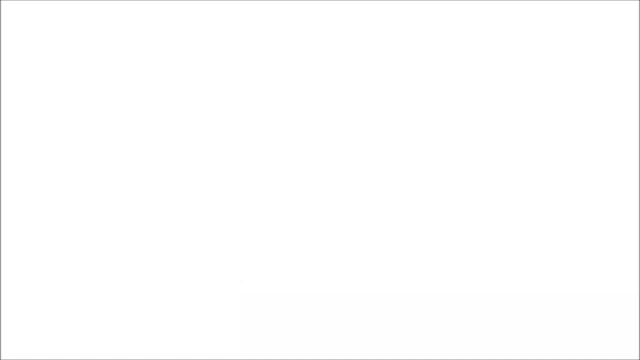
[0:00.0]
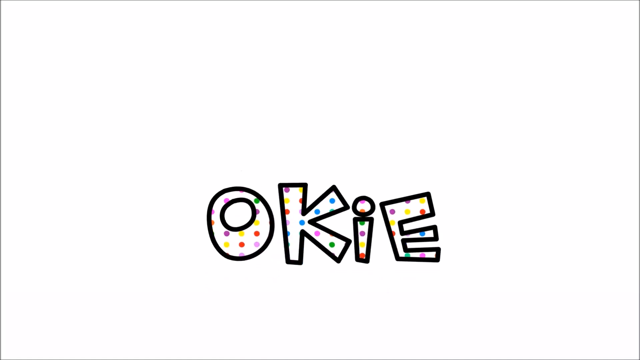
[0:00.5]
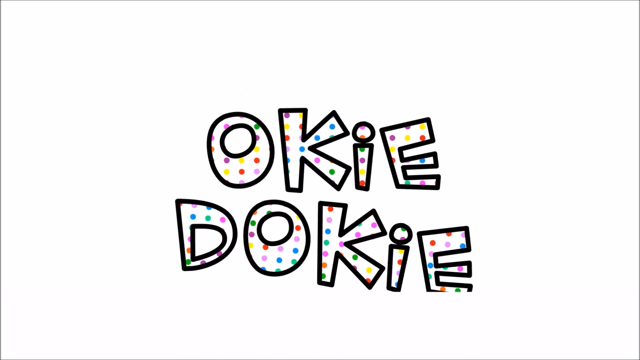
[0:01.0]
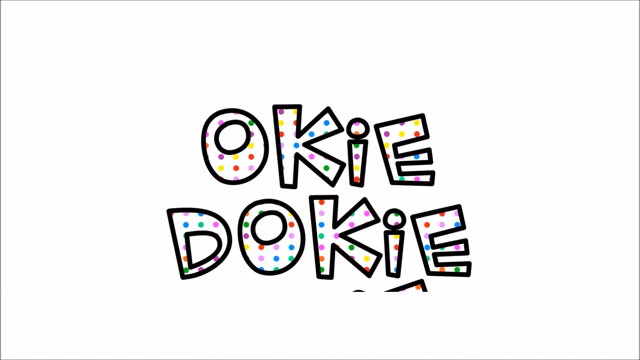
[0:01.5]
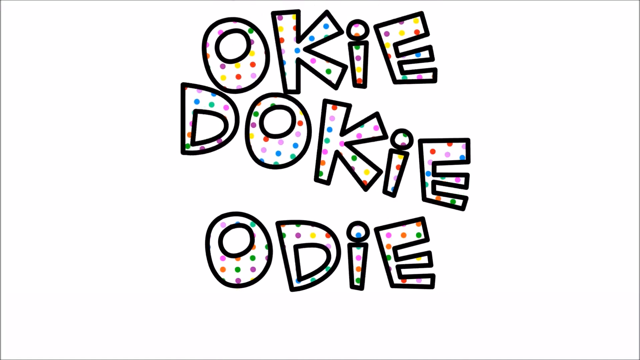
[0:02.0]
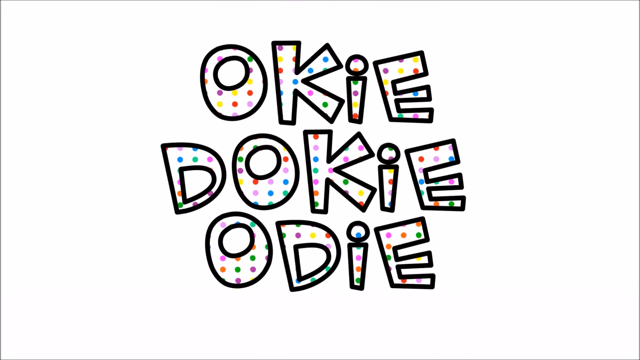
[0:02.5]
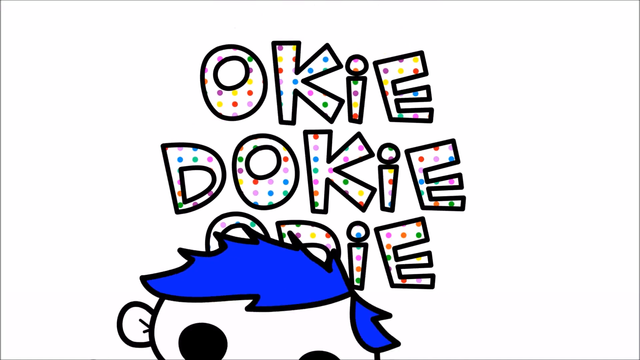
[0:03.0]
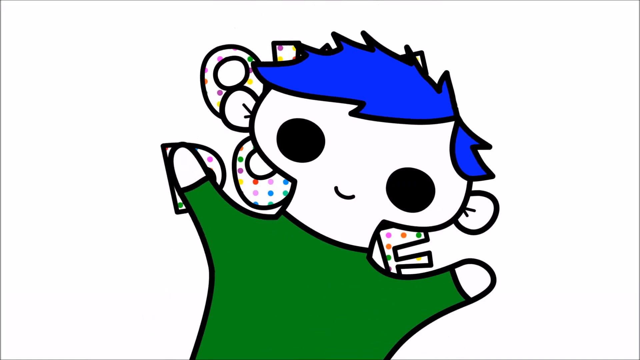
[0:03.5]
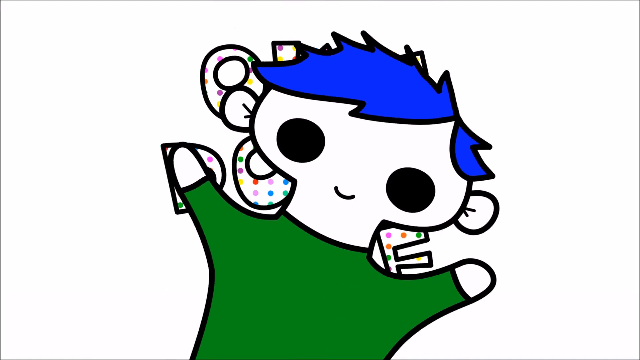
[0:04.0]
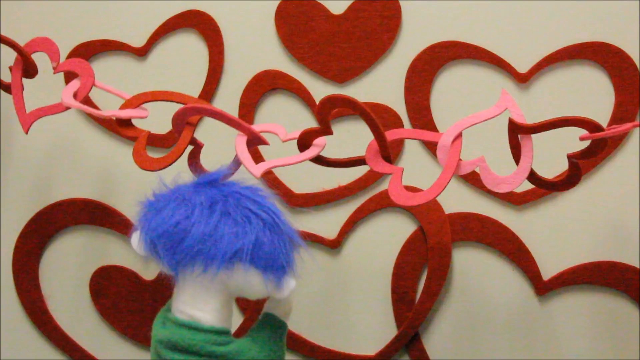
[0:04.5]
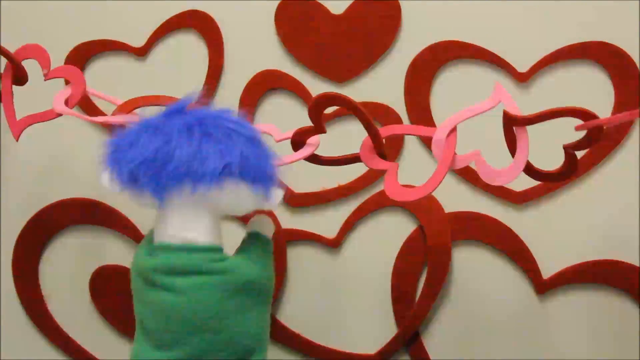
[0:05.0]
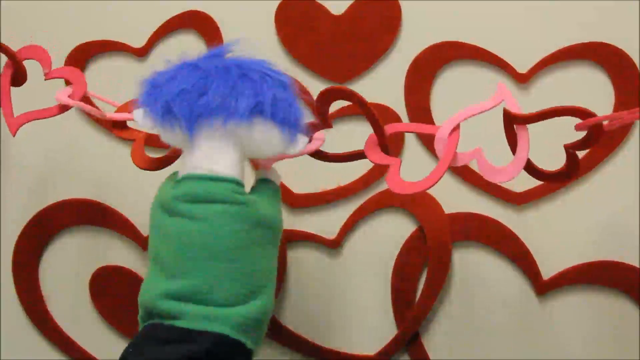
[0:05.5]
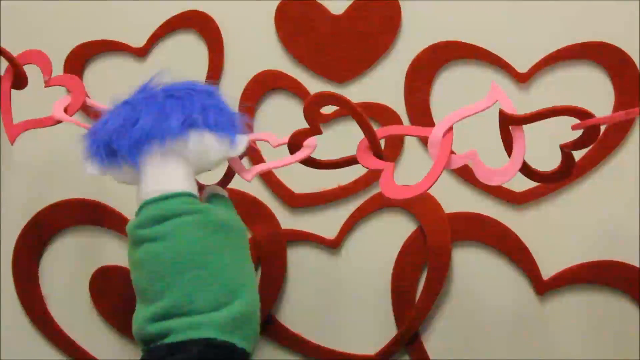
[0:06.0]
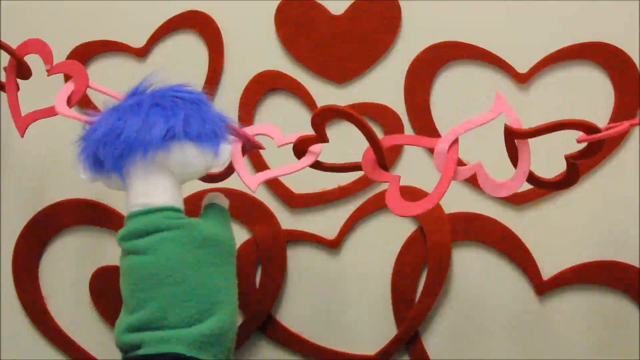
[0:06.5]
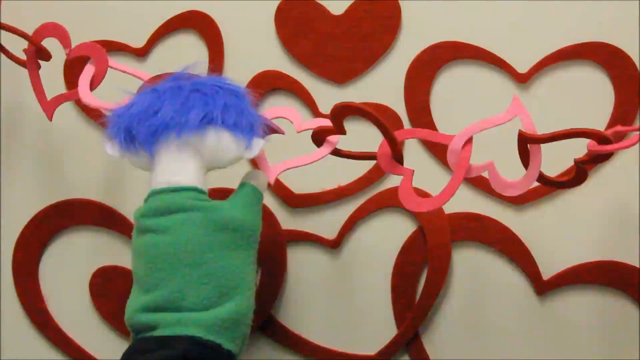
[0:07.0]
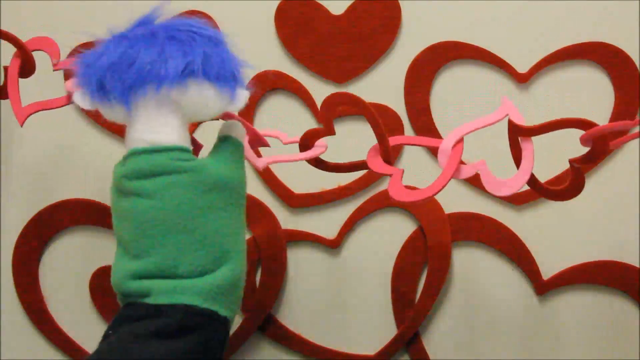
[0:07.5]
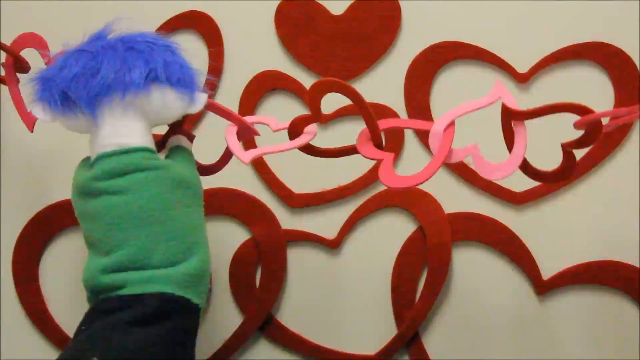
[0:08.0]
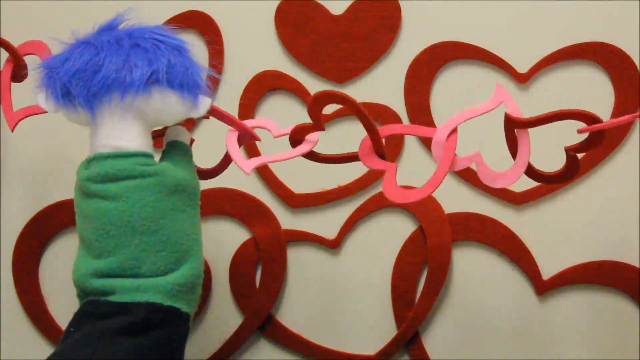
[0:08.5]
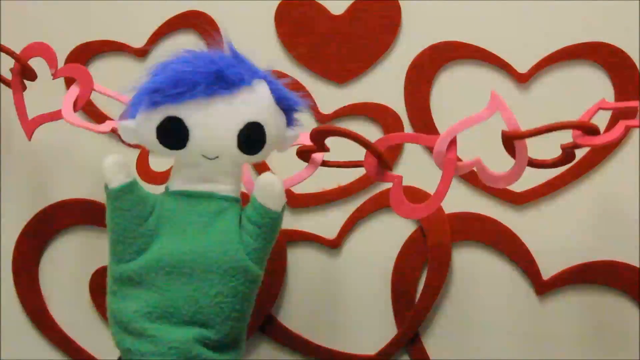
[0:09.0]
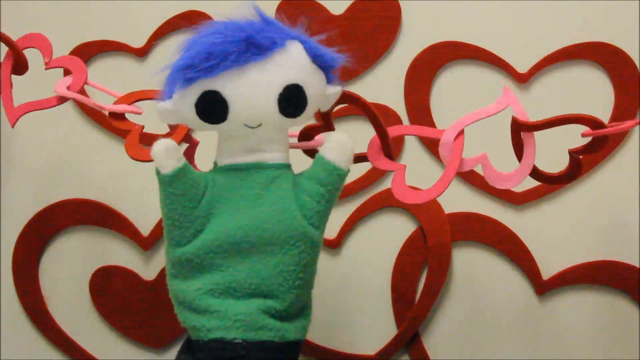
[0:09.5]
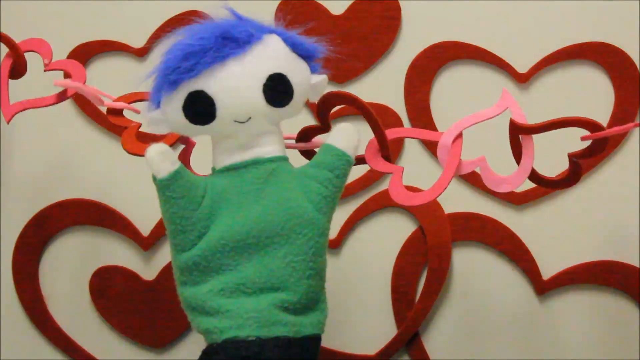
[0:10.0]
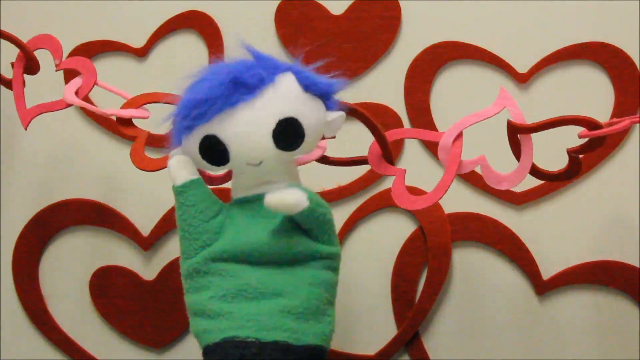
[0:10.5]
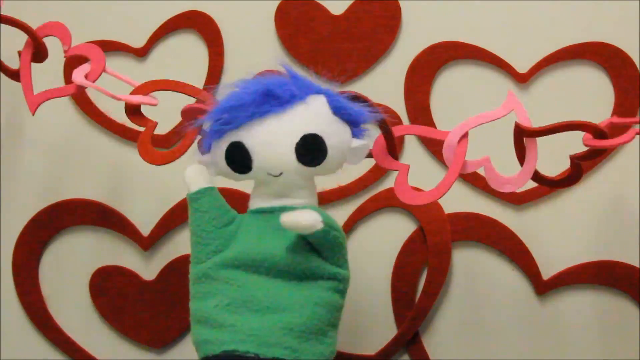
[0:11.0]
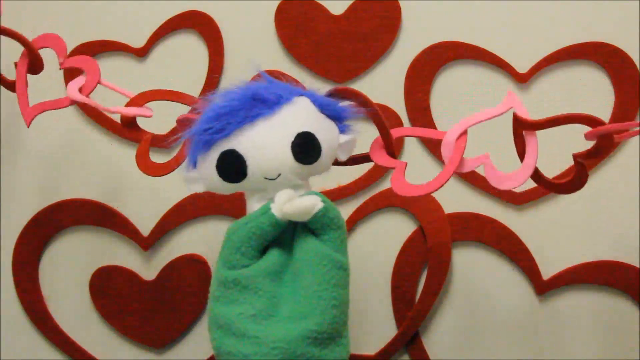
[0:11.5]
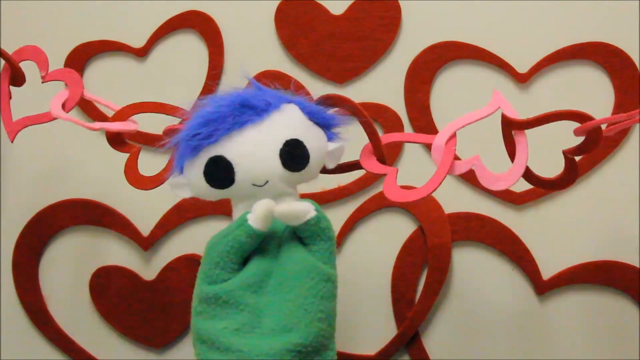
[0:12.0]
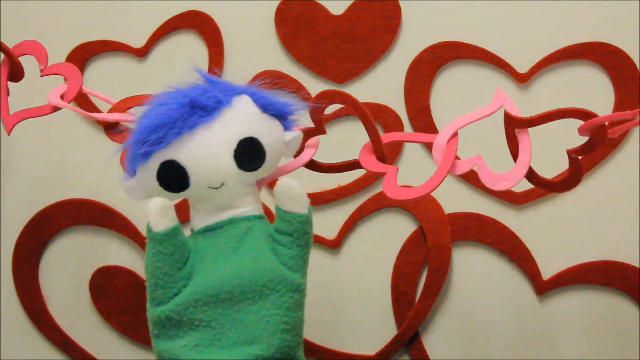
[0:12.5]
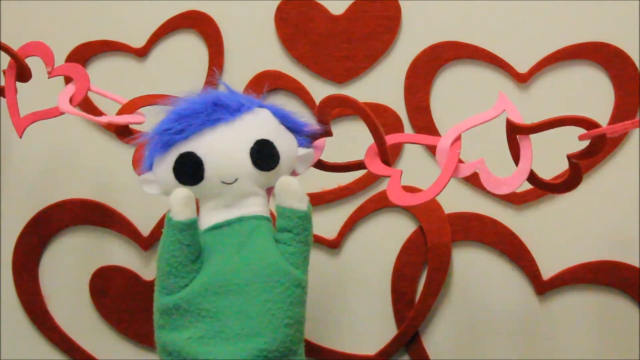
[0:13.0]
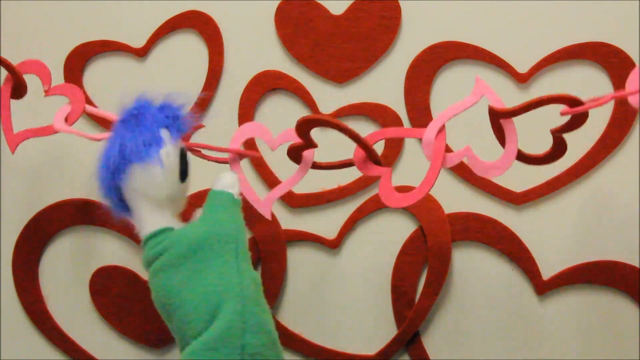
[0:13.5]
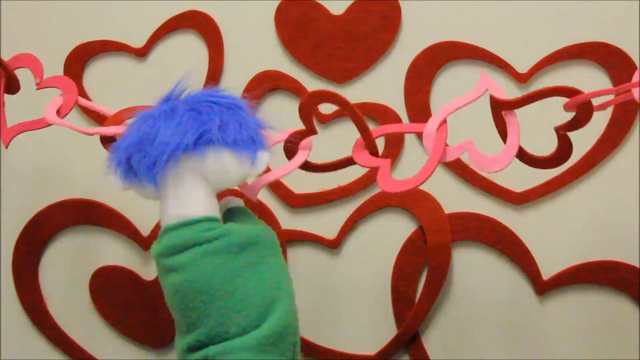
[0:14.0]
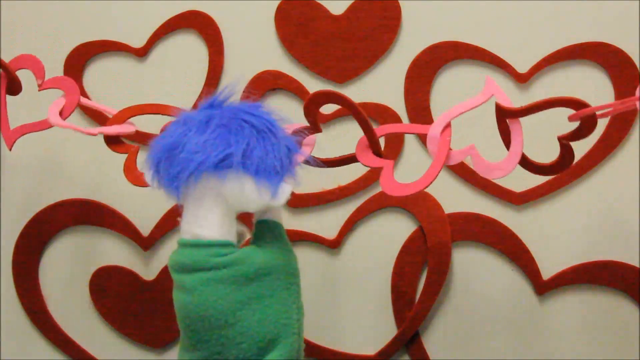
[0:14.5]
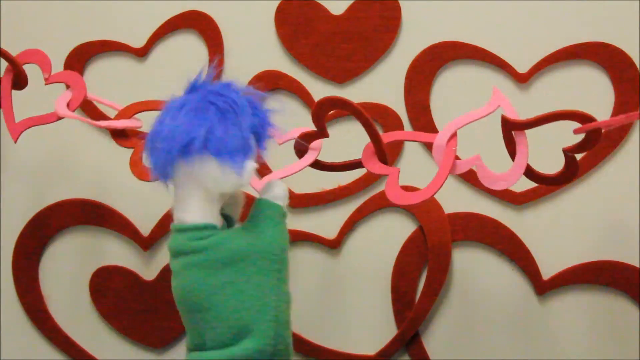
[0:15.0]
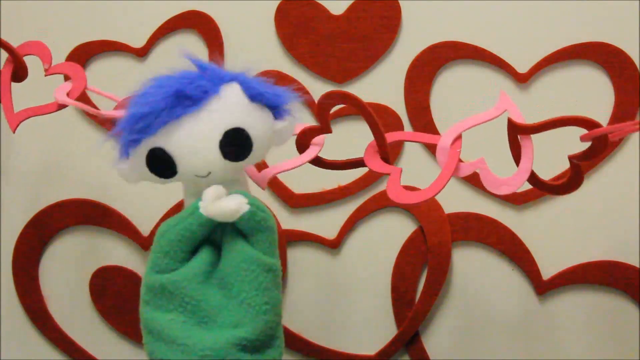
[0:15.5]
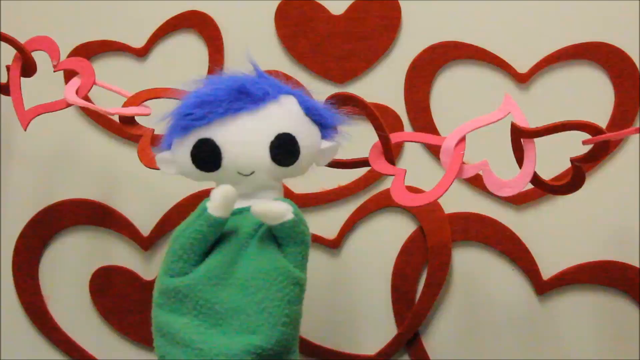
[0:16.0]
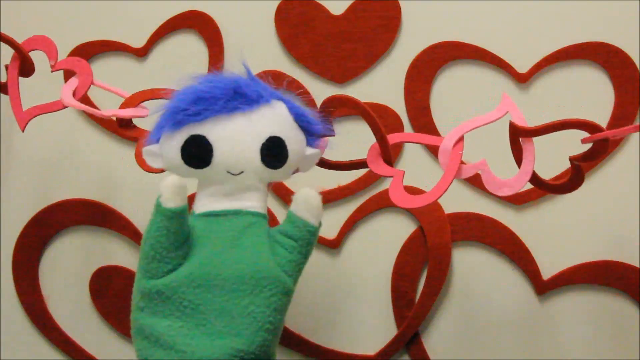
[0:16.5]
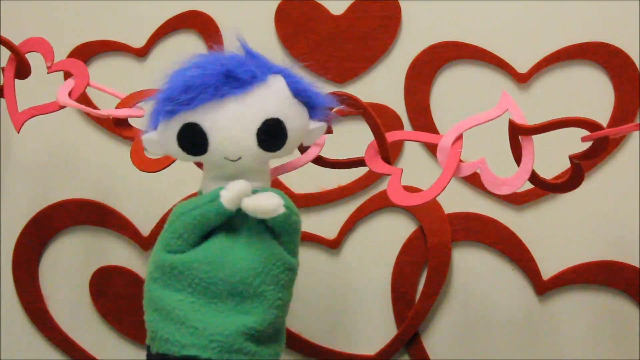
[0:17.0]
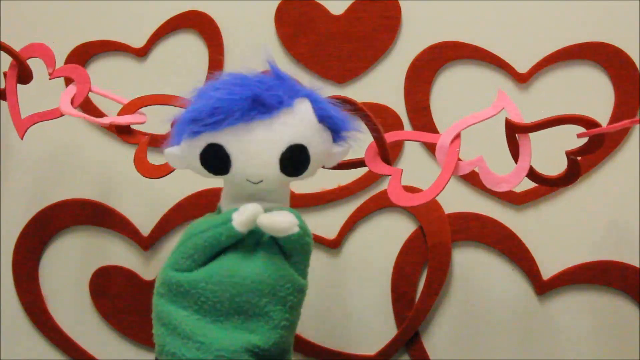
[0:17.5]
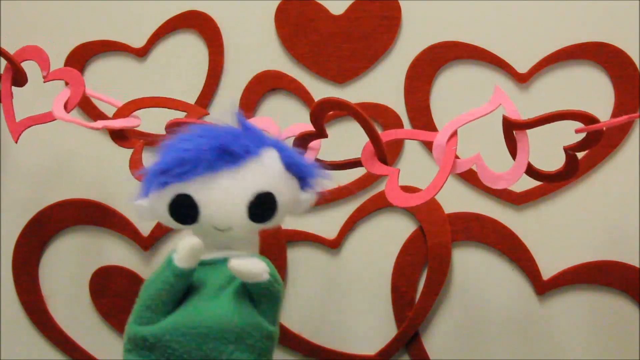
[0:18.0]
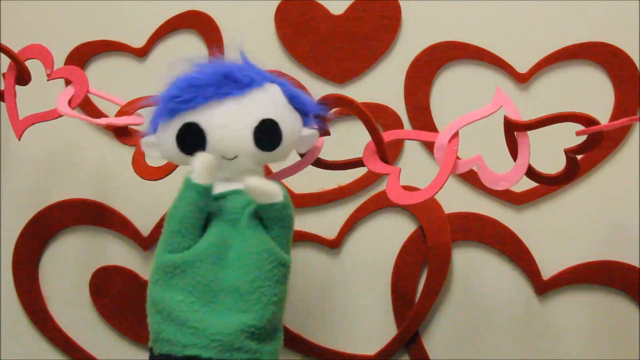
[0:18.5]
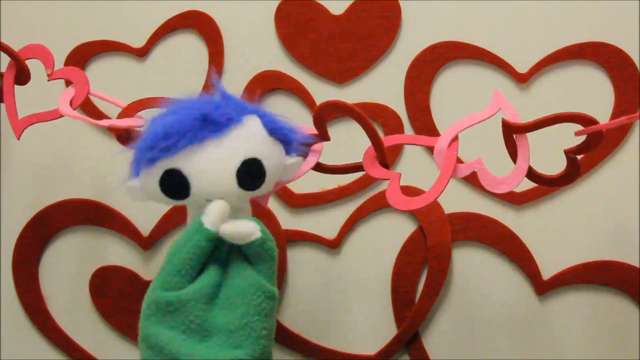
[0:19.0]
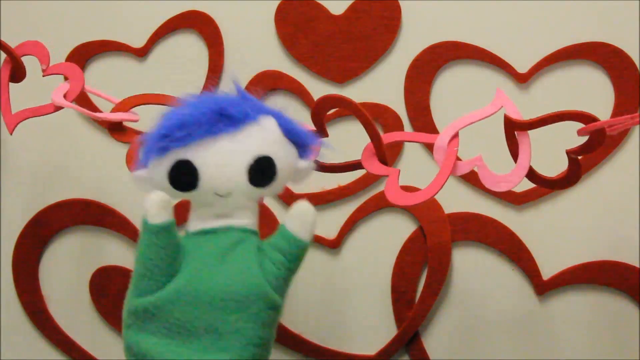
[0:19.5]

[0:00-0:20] Text appears that reads "okie dokie, Cody"; the lettering looks as if a kid wrote it and has a lot of polka dots in the letters. Then what looks like a hand puppet appears, apparently a cartoon of the puppet. The cartoon puppet has blue hair, big blue eyes, a smile, its thumb and pinky finger held out, and a green shirt. The video then moves to what seems to be the actual puppet. There are many hearts in the background, along with a chain of hearts kind of linked together, and the puppet is kind of messing with these hearts. He is seen from the back: he has blue hair and a green sweater, and the puppet itself is all white as he messes with the heart chains. Some of the hearts are red and some are purple, and there is one solid heart in the background. He turns around quickly, showing his black eyes, his smile and the front of his sweater. He starts waving at the viewer, then kind of puts his hands together and goes back to messing with the heart chain.